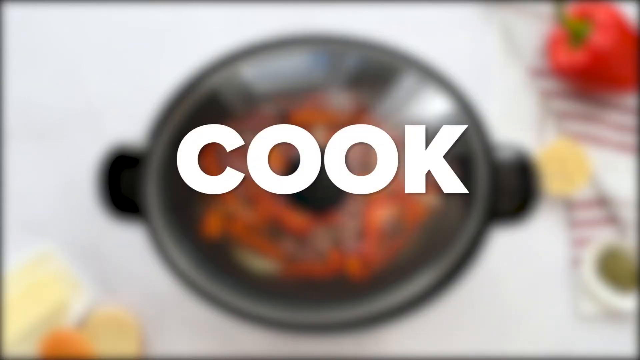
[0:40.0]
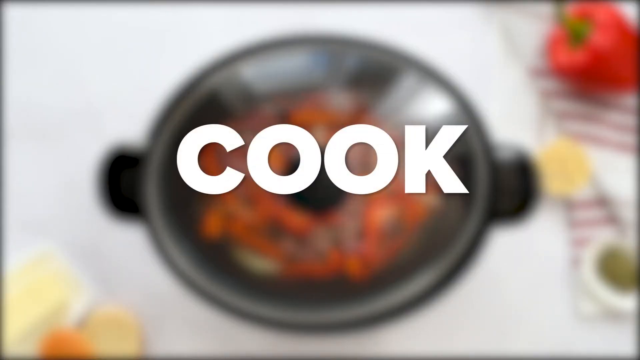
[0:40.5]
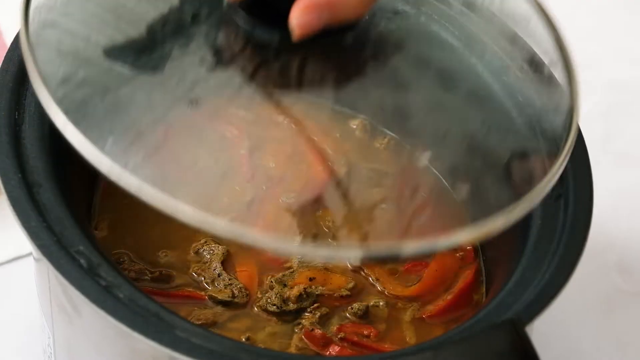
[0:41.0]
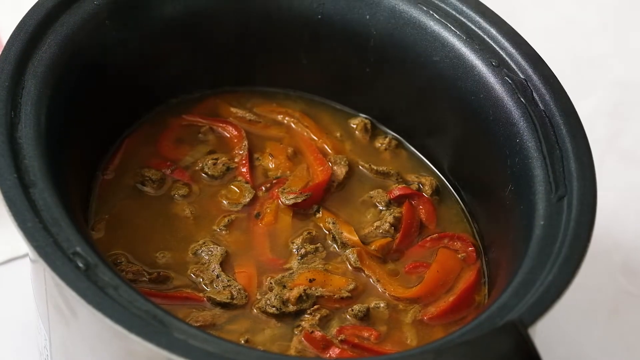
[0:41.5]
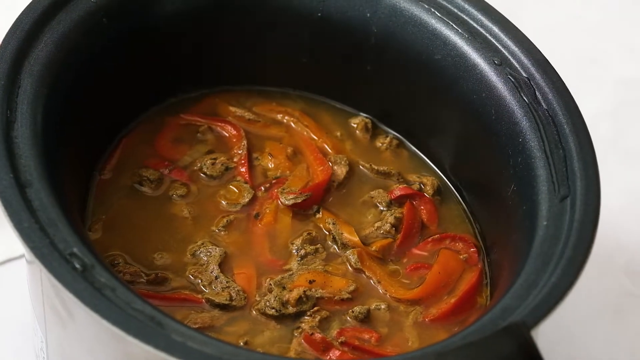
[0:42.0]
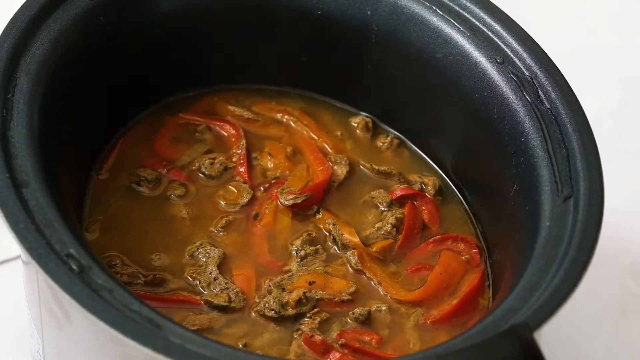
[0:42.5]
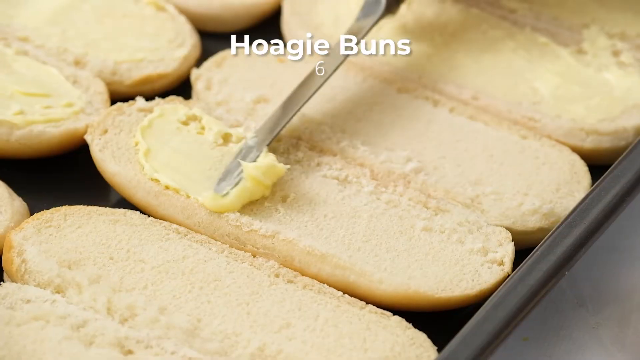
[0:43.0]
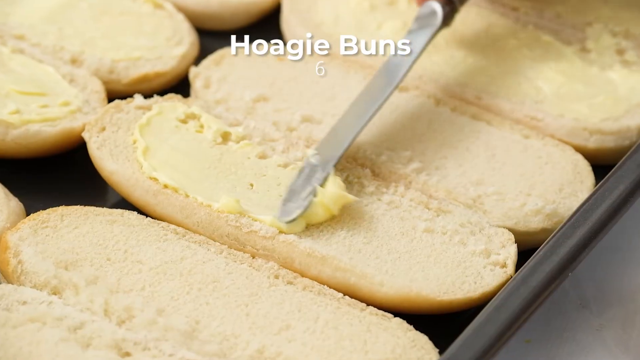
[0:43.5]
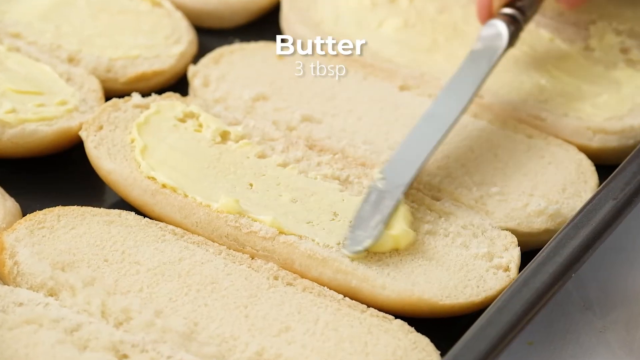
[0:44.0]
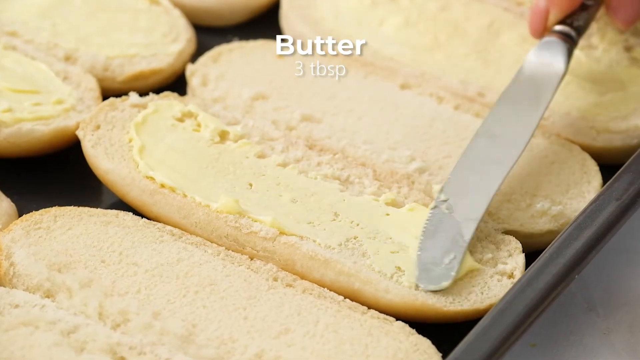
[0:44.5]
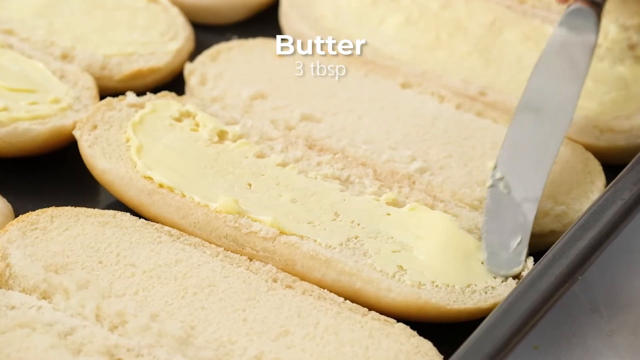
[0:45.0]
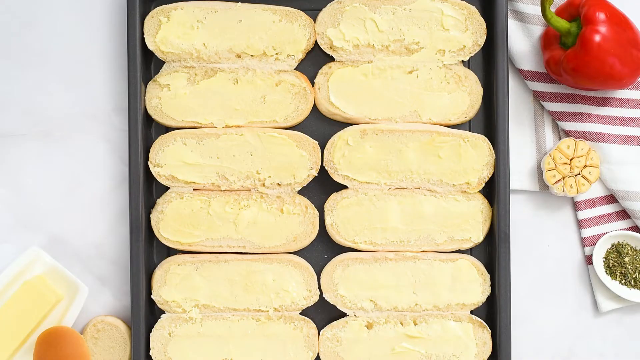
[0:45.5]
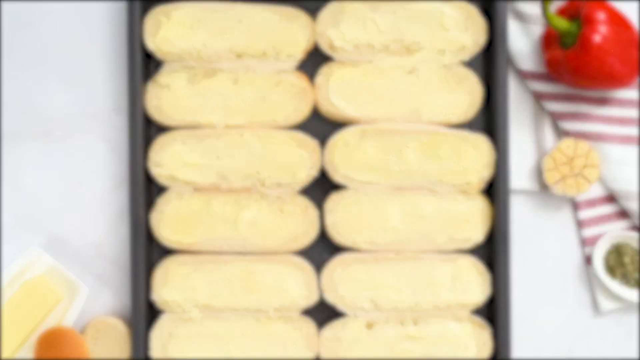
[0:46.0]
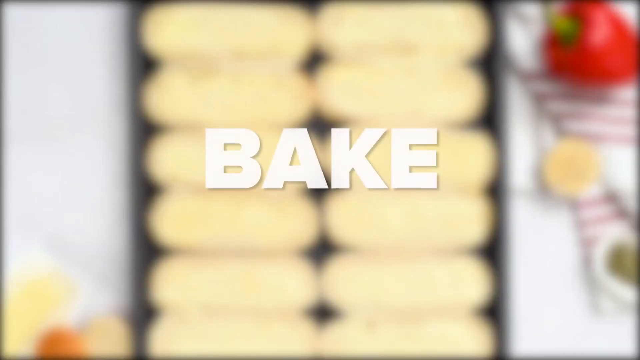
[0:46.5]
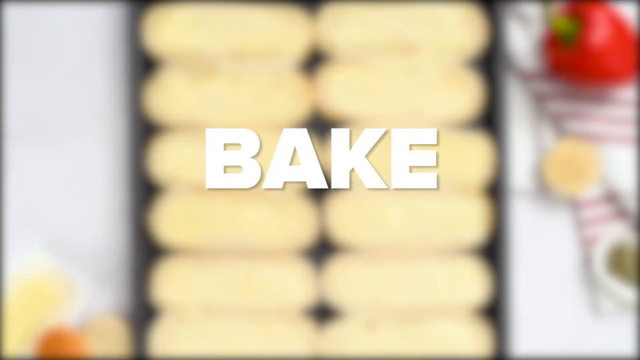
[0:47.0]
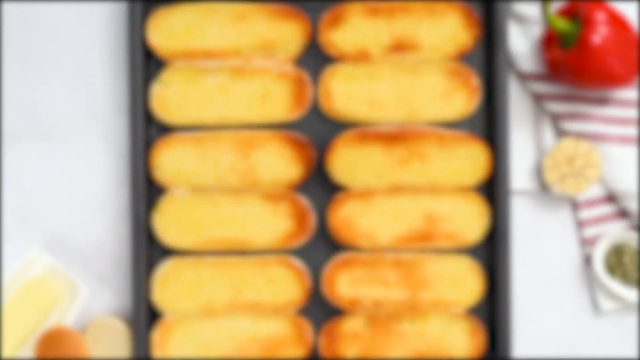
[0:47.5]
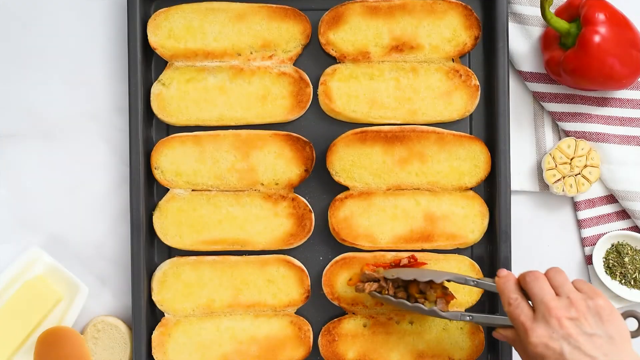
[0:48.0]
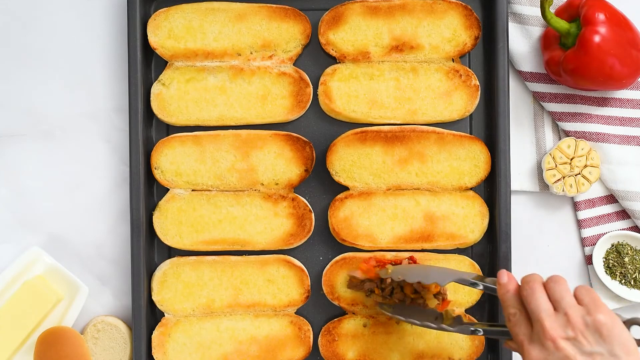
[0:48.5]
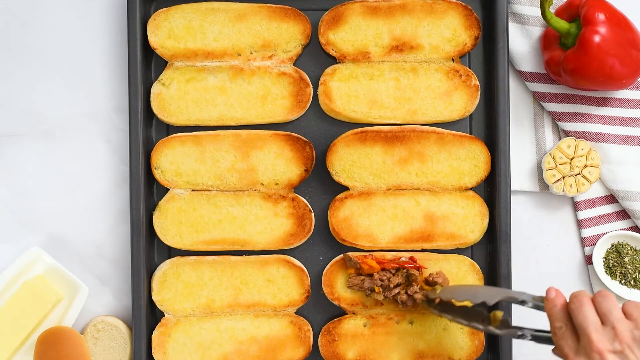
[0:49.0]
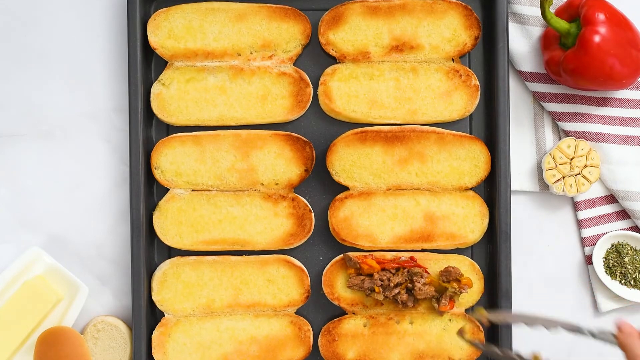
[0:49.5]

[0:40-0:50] A top-down view shows a covered crock pot filled with food. The view is blurred as text pops up in the center of the screen reading "cook". A close angled view follows as someone lifts the lid, giving a better look at the pot filled with strips of meat and strips of peppers submerged in juices. The shot cuts to a tray lined with open hoagie buns, and someone uses a flat knife to spread butter on the inside of the buns. In a top-down view of the buns, the camera blurs as text pops up in the center reading "bake". The camera fades back in to show the buns toasted. The person uses tongs to place portions of the meat and veggies on the buns, and a close shot shows them placing more.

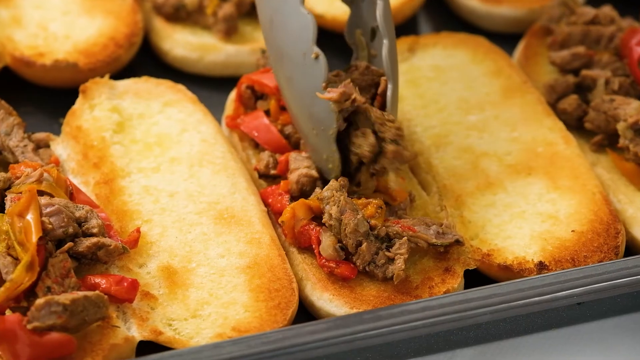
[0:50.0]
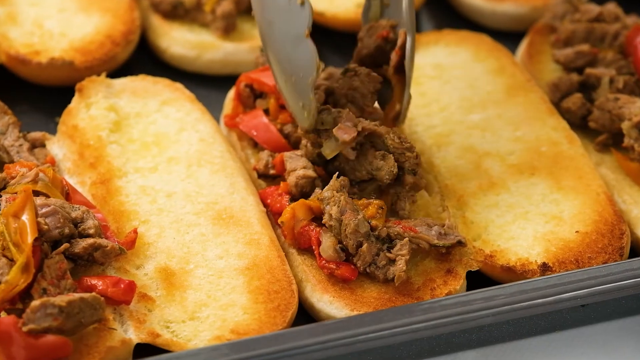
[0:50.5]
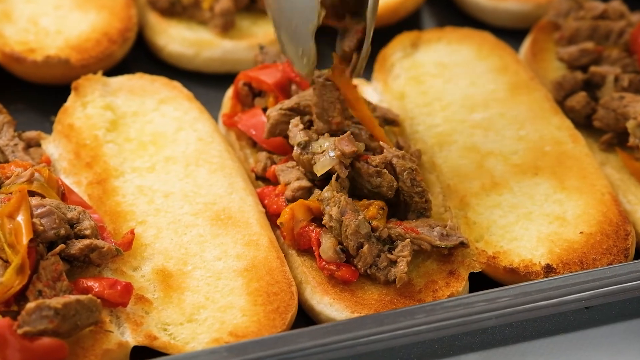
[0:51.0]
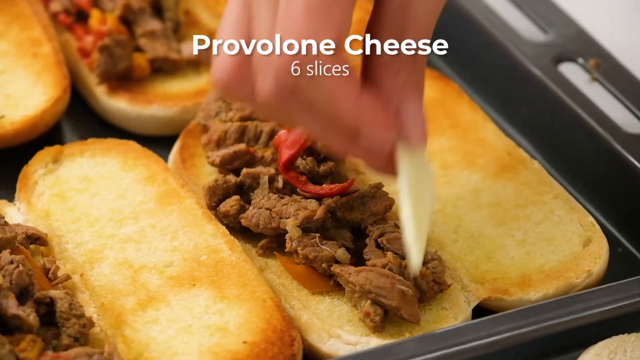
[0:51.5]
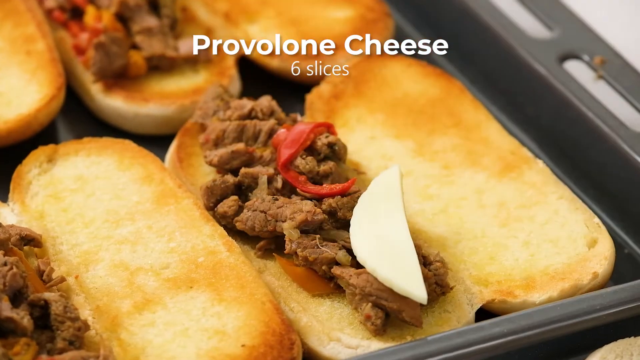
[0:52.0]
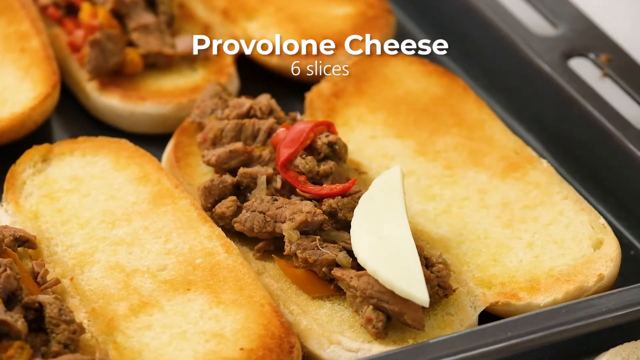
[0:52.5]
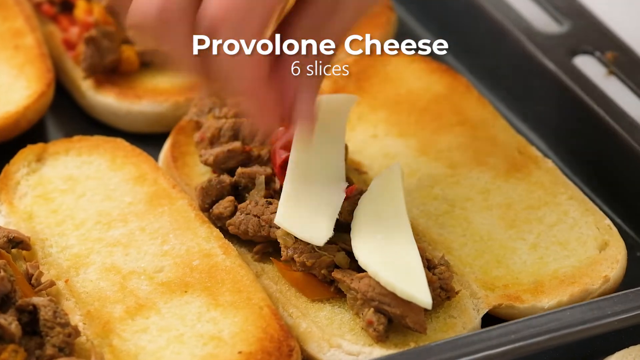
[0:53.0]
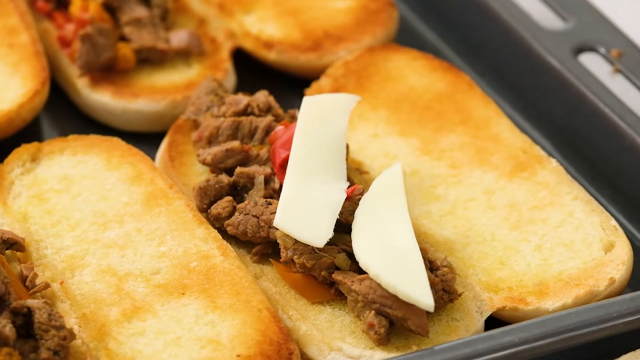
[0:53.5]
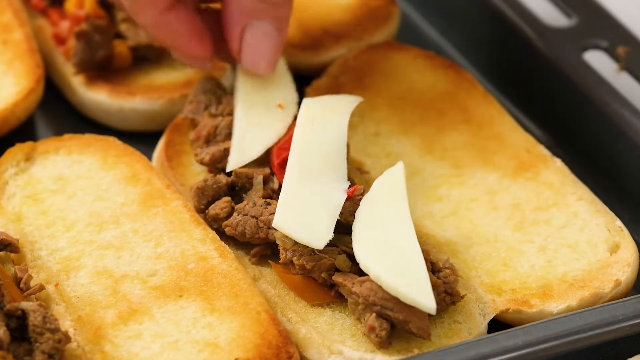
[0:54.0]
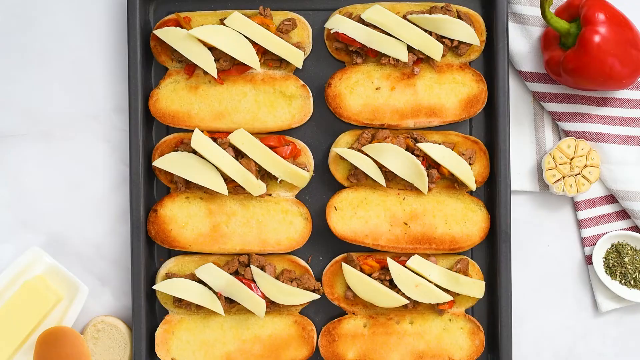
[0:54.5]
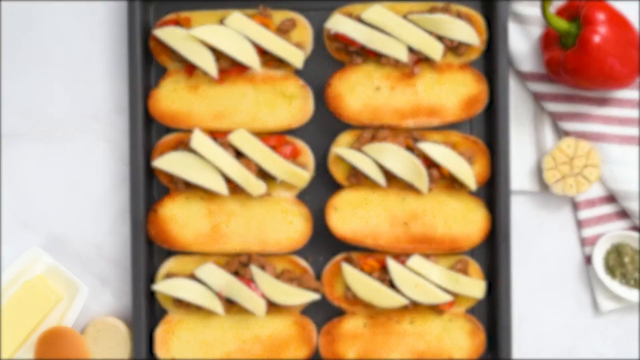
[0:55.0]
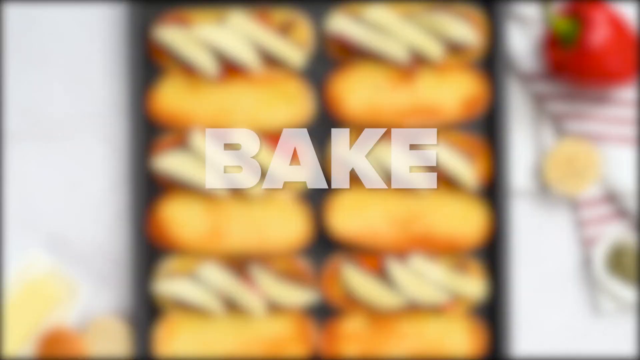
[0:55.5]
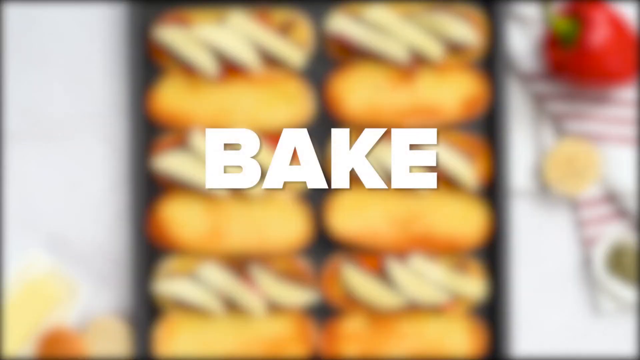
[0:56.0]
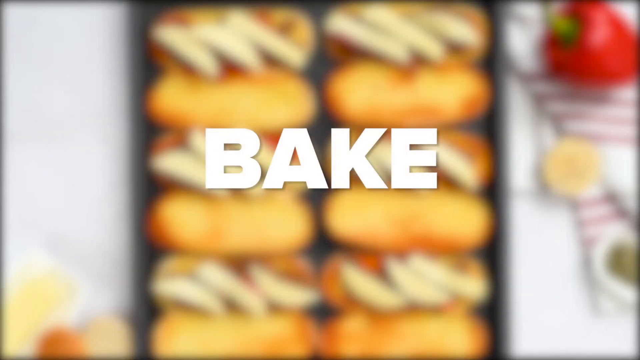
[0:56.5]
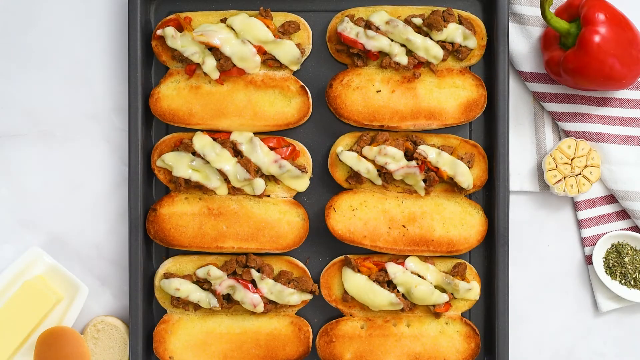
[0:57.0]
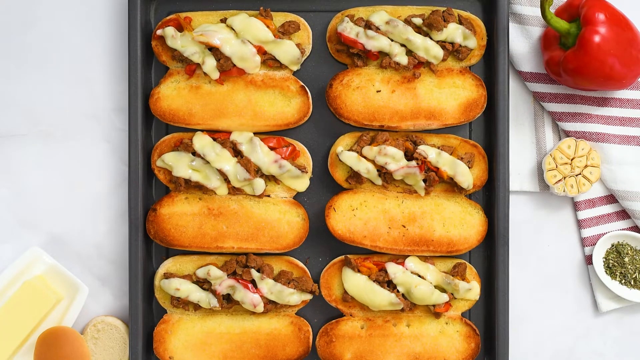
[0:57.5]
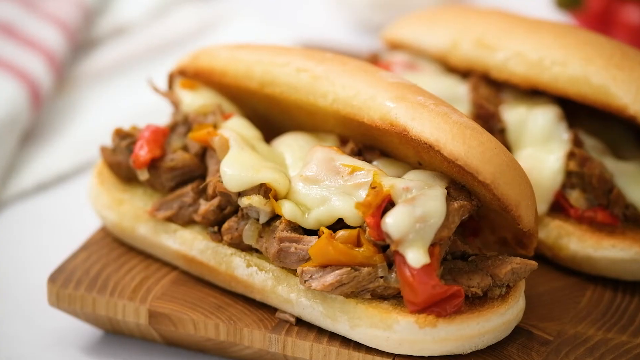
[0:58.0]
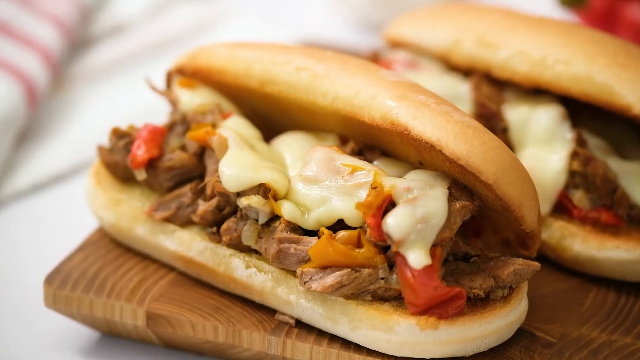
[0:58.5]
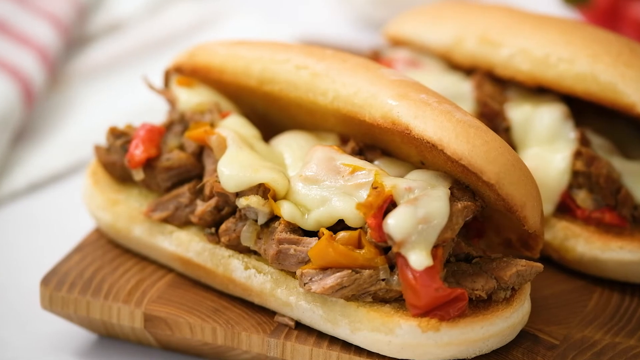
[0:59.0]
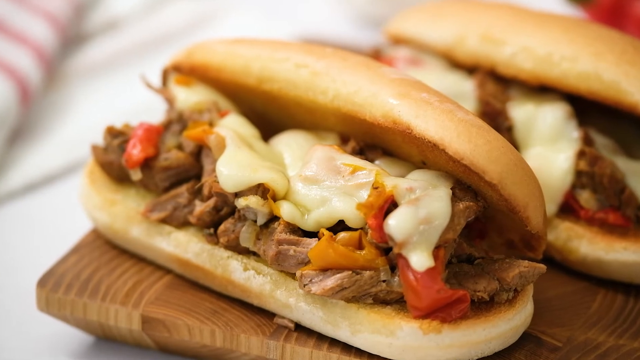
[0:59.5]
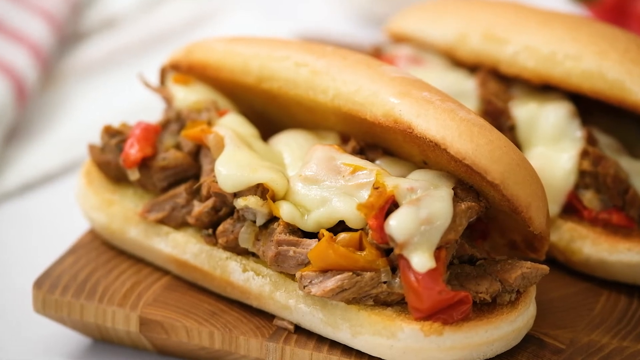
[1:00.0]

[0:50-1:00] A close angled shot shows a tray lined with open toasted hoagie buns, each topped on one side with shredded meat and strips of peppers. A pair of tongs places a little more on one of the buns. The person then places slices of provolone on top of the meat. A top-down view shows the buns all topped with cheese. The camera blurs as text pops up in the middle reading "Bake". The camera focuses, showing the buns with the cheese melted. The video cuts to a close shot of two stuffed hoagie buns.